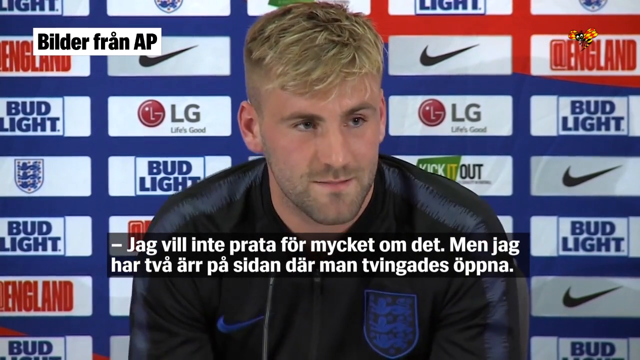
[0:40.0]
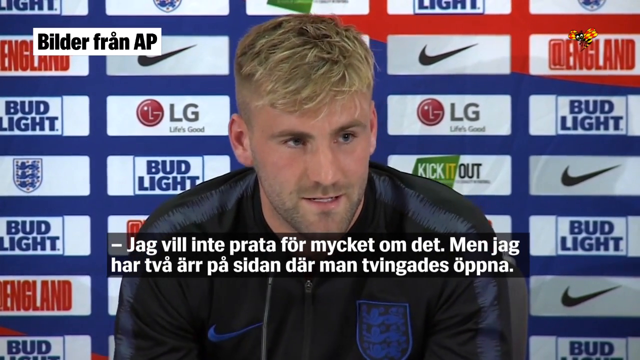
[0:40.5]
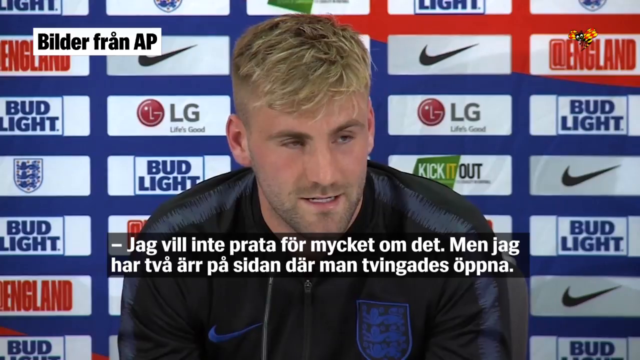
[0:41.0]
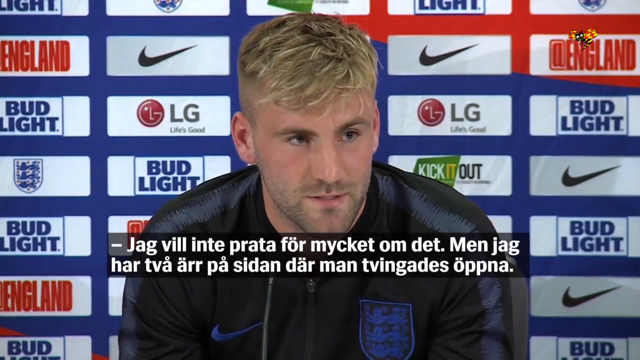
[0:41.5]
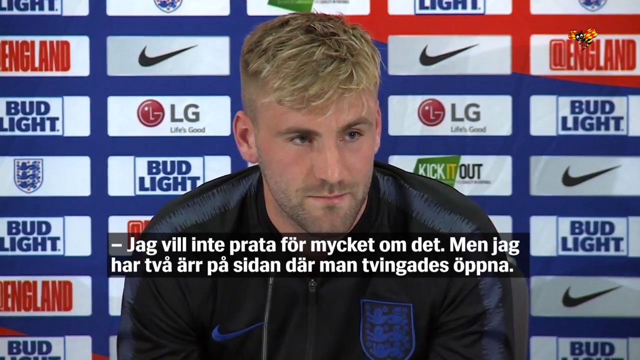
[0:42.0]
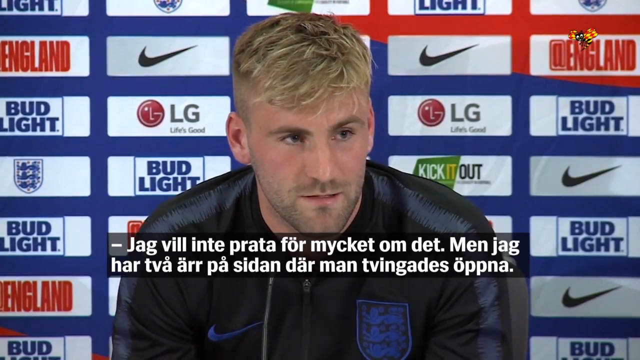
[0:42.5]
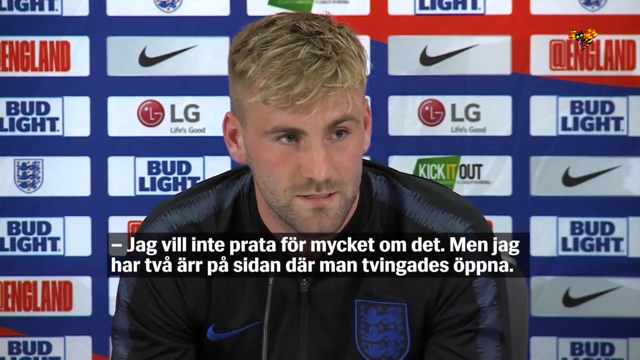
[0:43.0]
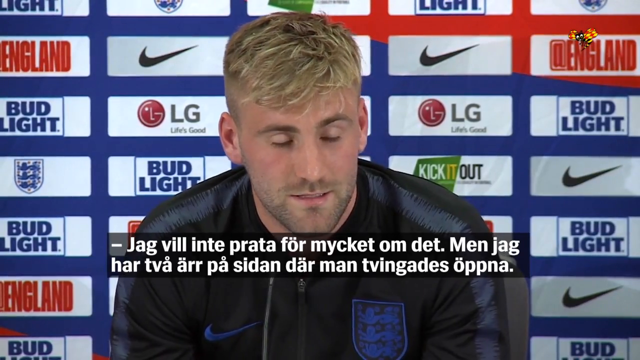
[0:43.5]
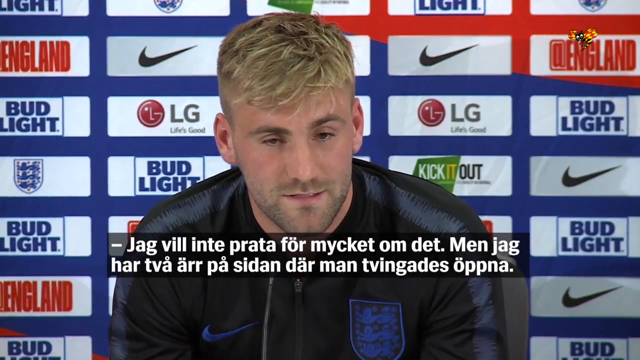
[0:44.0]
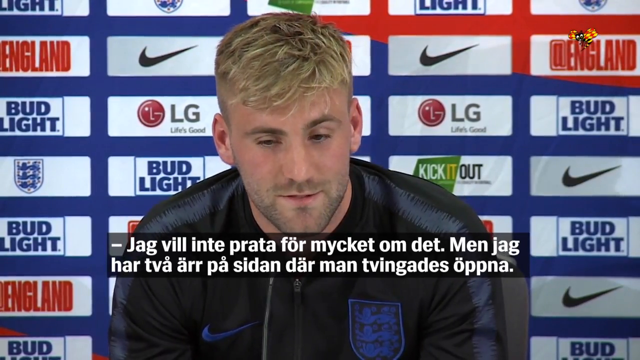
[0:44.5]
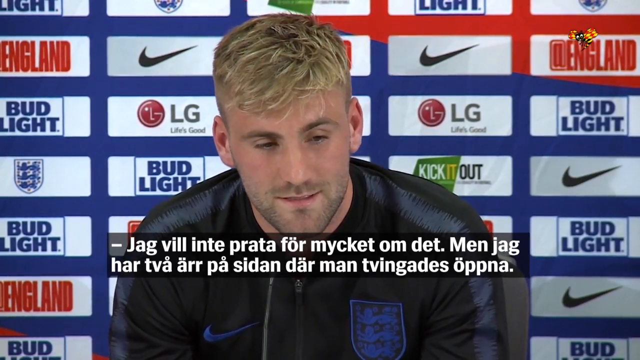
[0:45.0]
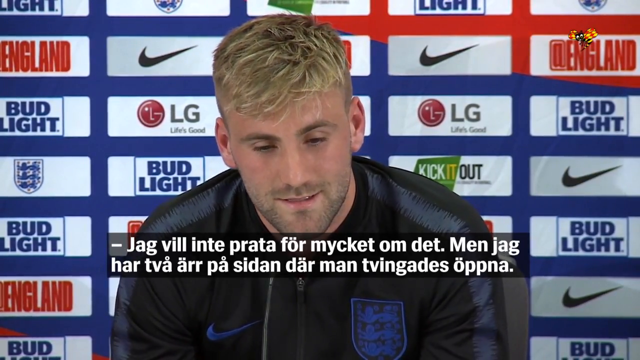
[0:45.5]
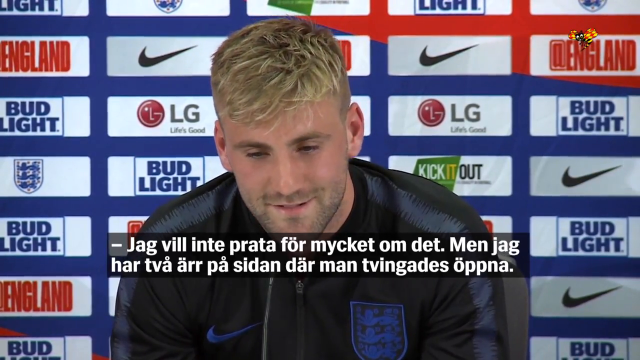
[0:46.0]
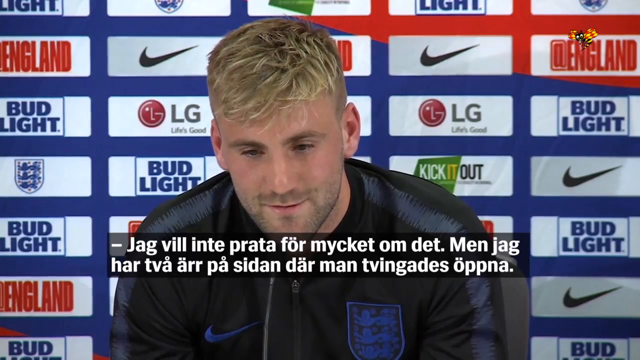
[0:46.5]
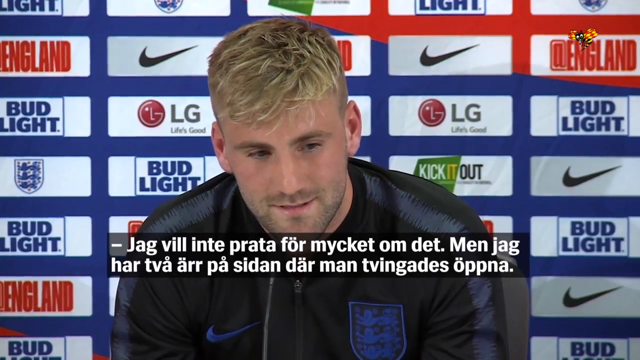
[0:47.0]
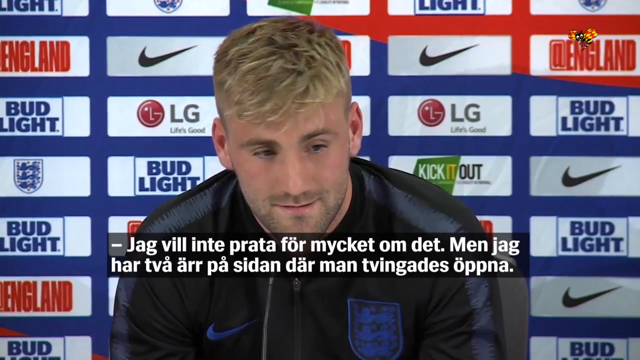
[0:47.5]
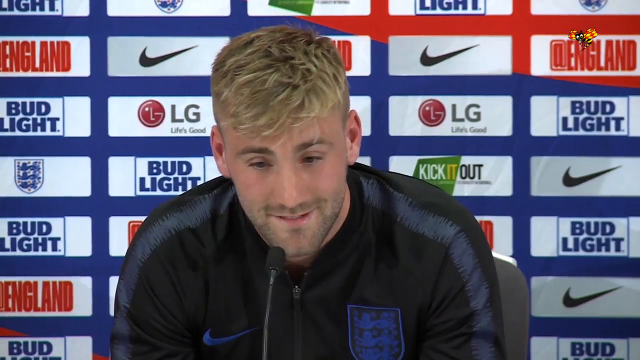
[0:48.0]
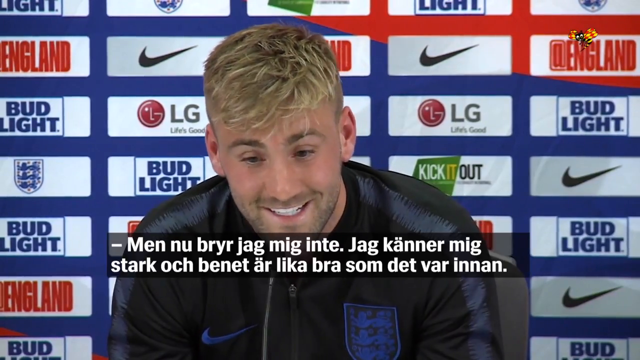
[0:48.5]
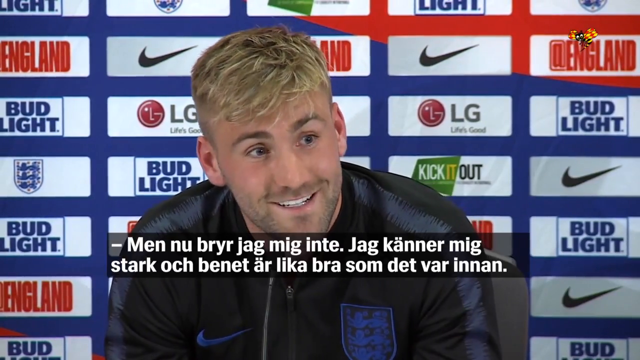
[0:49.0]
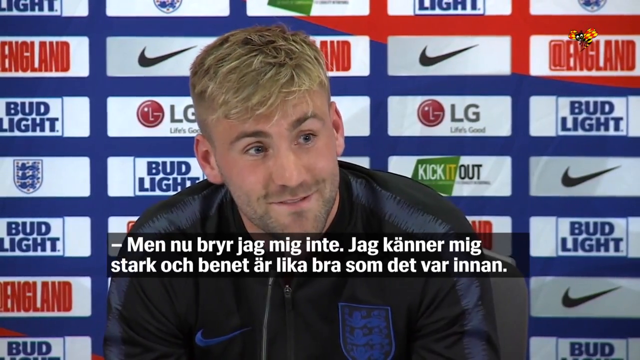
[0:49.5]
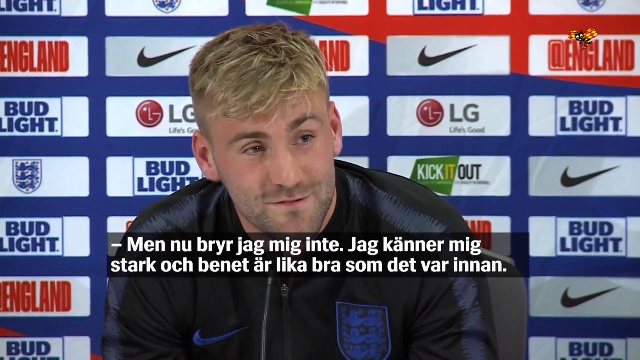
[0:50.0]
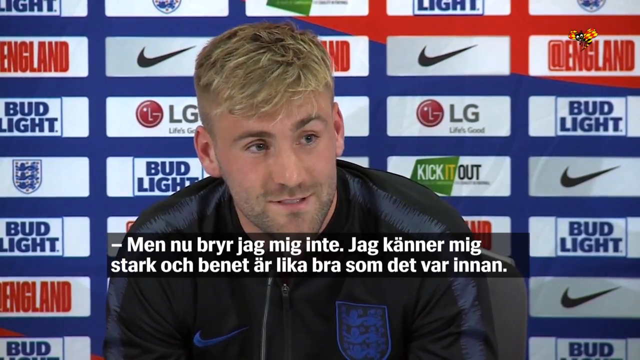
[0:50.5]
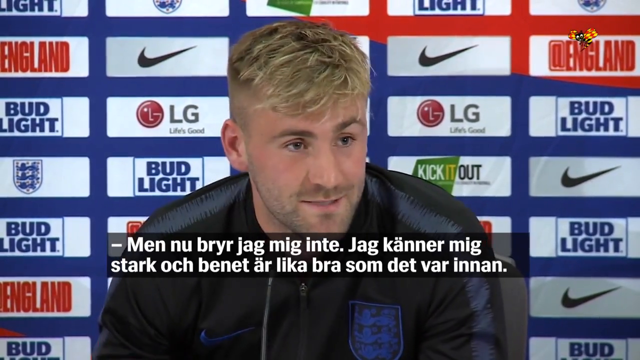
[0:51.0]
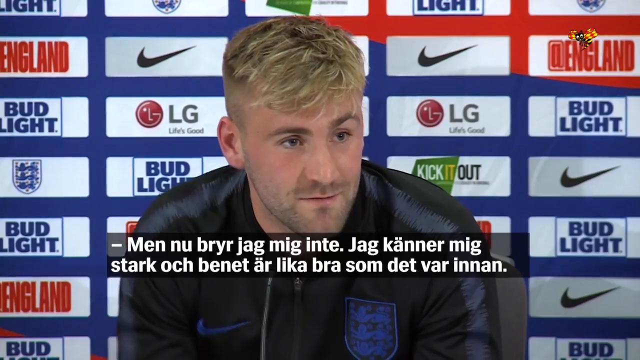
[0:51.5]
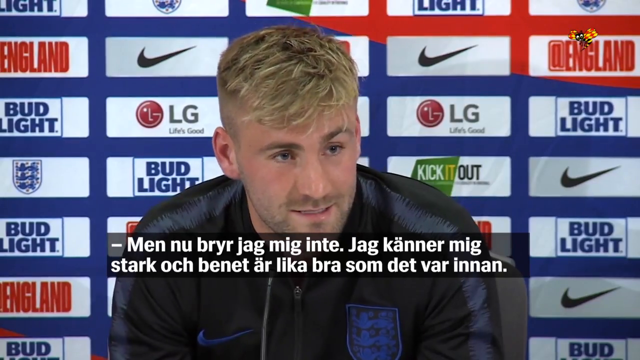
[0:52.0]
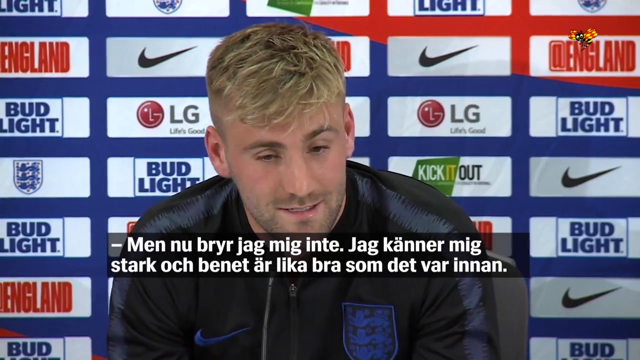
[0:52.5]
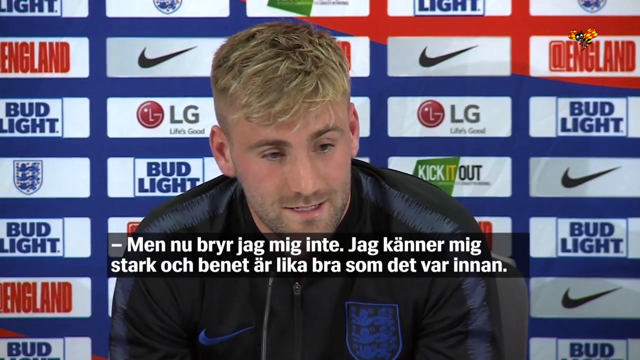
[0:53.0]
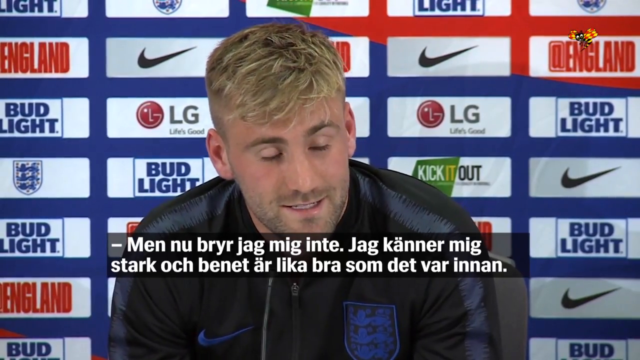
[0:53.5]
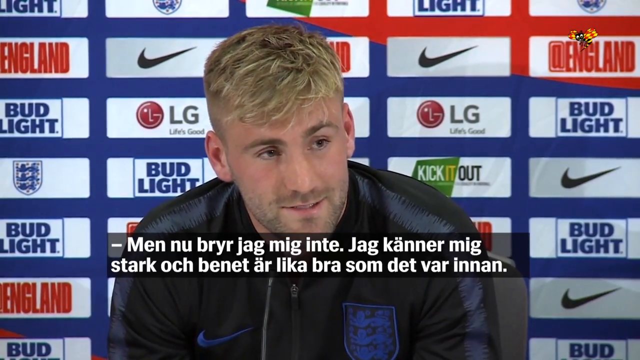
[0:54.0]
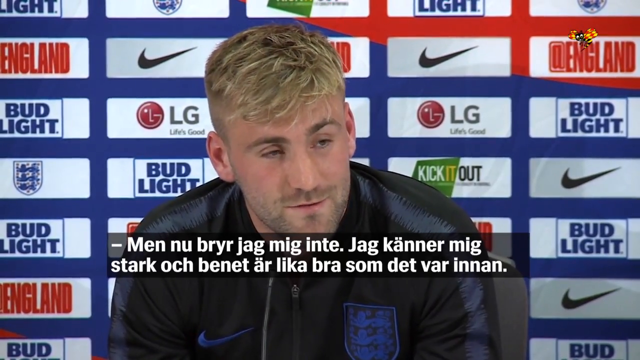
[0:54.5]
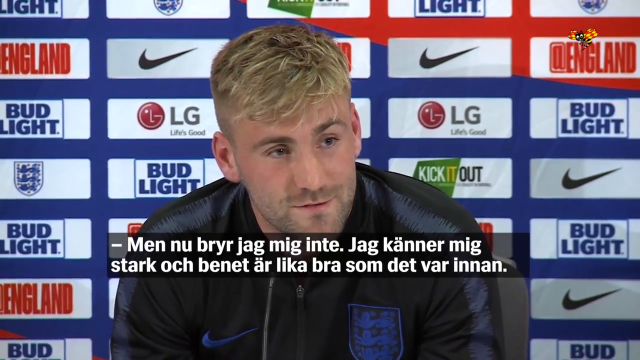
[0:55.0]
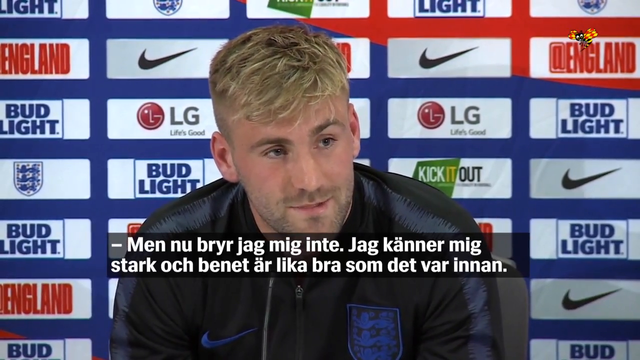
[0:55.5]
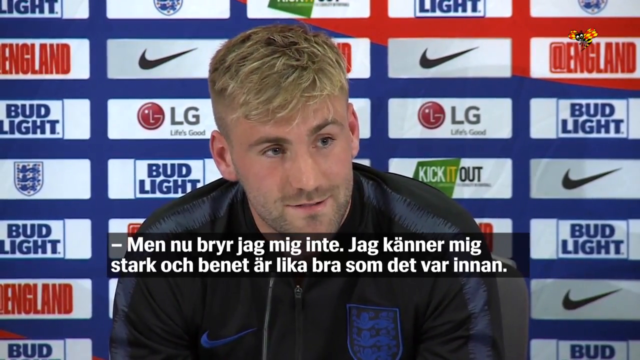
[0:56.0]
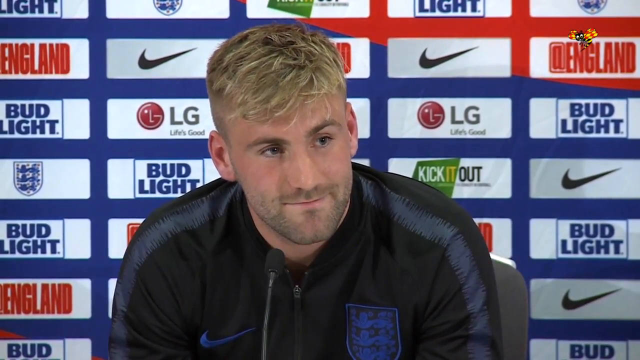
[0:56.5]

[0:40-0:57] Luke Shaw, a blonde-haired soccer or football player for the England national team, is in front of many sponsors such as Nike, LG Life's Good, the England logo and Bud Light. He sort of appears to be answering questions, sort of just moving his hands around, making eye contact and talking to whoever is speaking to him. Subtitles that are not in English appear in white text on a black letterbox. He smiles quite a few times and keeps looking in the direction of the interviewer. The video appears to simply be some sort of interview in which he is being asked questions, translated into a language other than English.